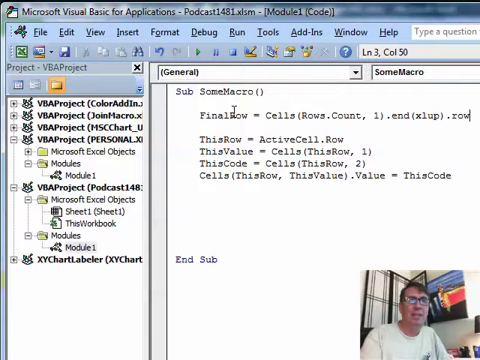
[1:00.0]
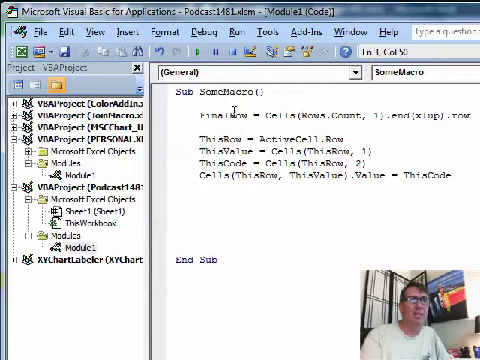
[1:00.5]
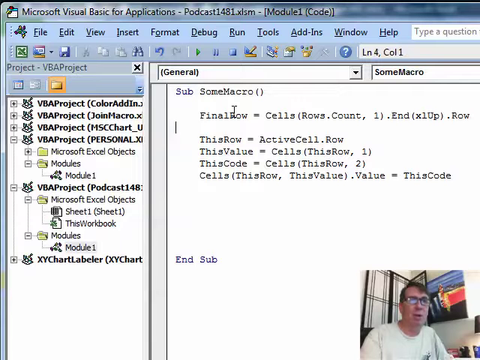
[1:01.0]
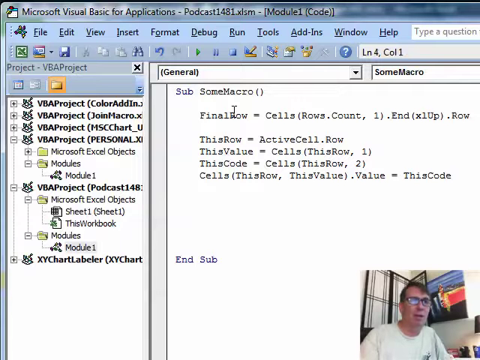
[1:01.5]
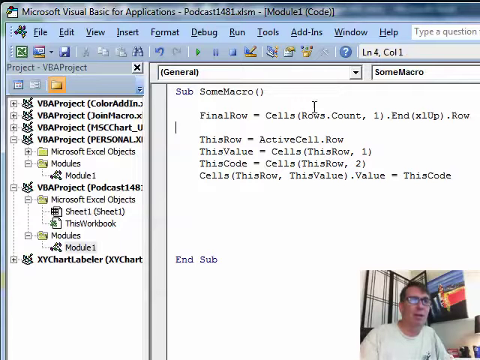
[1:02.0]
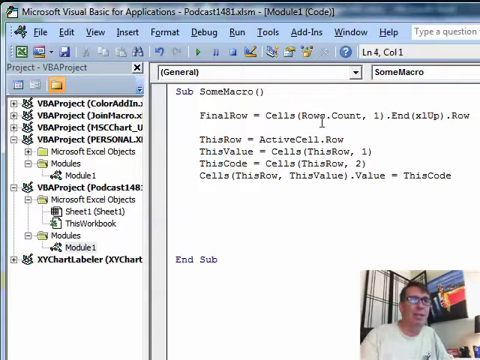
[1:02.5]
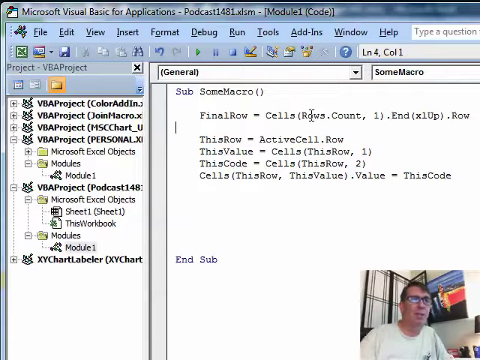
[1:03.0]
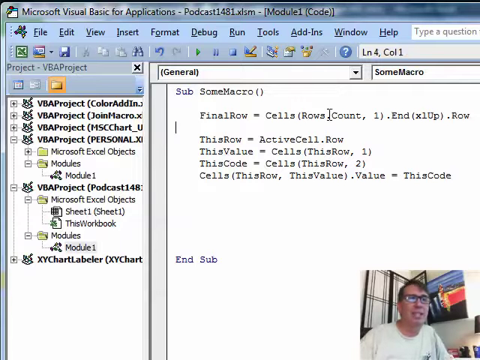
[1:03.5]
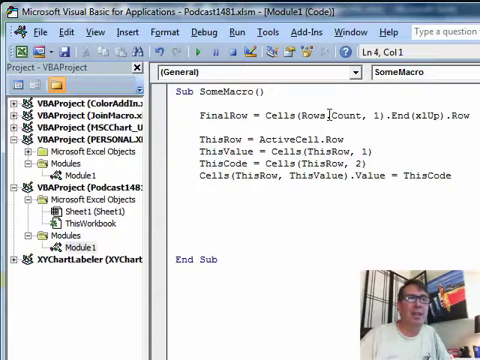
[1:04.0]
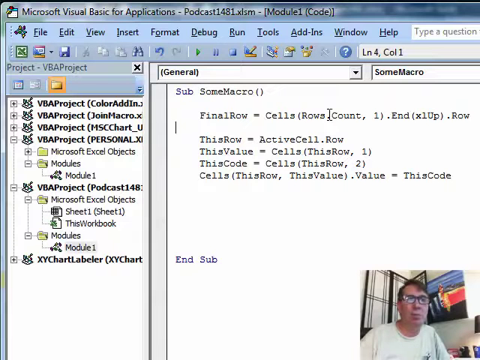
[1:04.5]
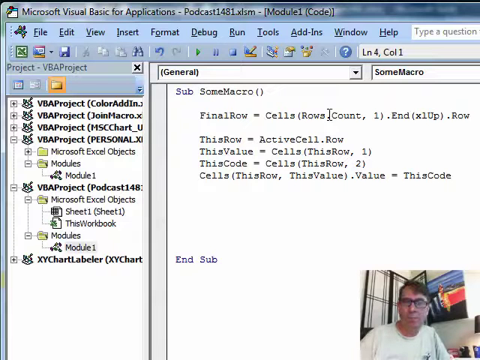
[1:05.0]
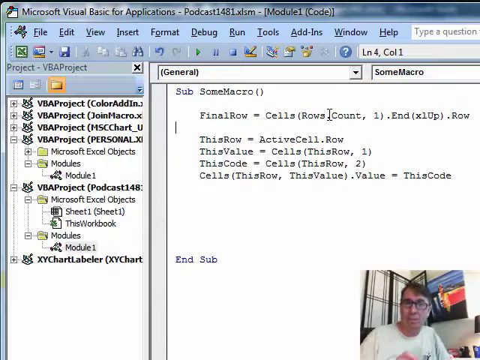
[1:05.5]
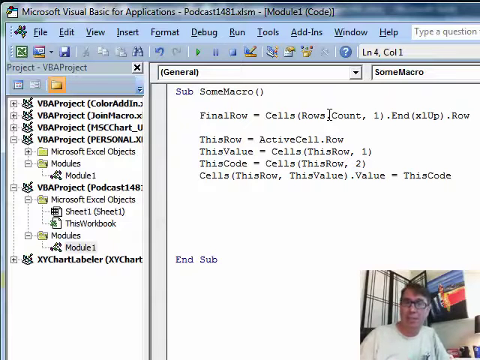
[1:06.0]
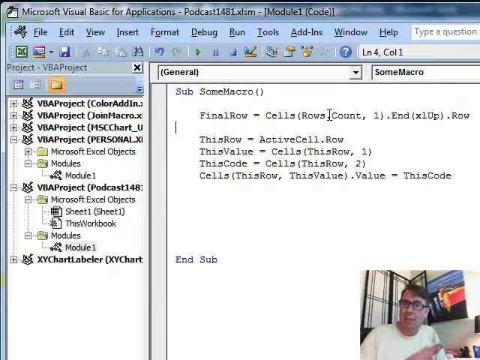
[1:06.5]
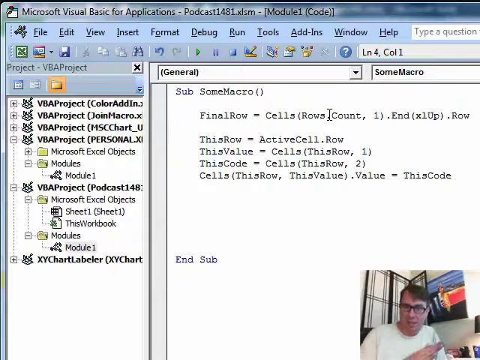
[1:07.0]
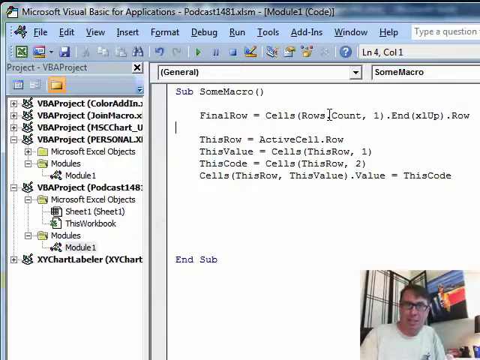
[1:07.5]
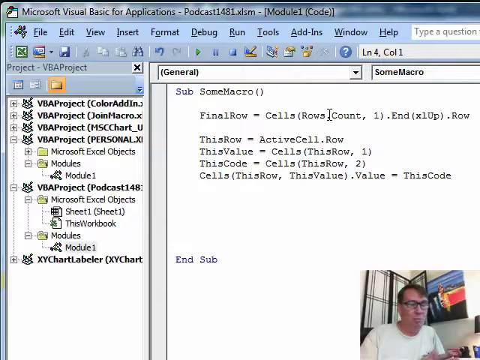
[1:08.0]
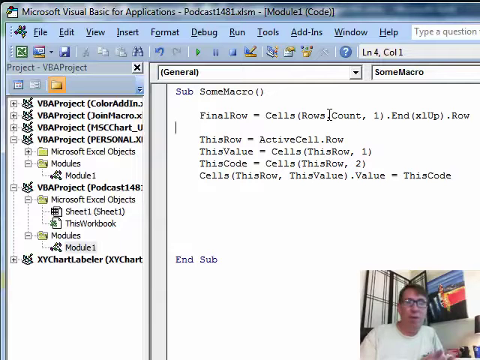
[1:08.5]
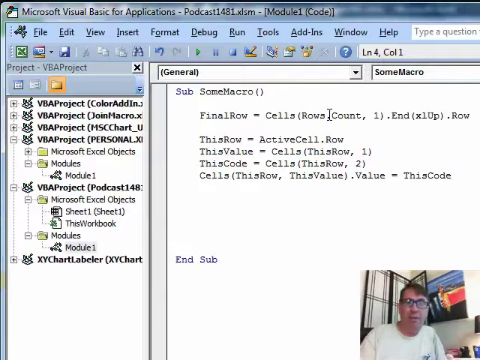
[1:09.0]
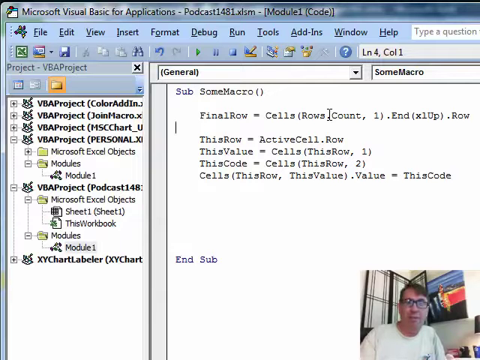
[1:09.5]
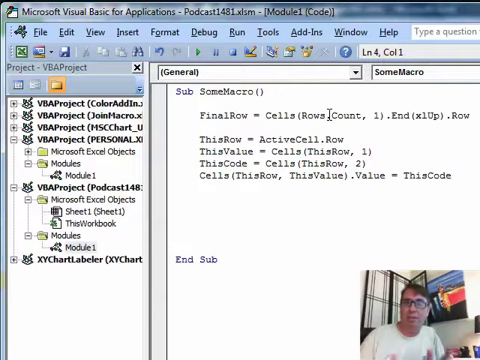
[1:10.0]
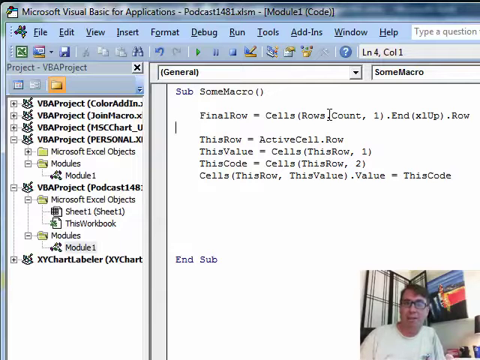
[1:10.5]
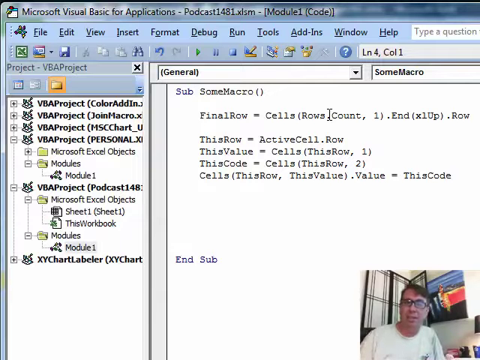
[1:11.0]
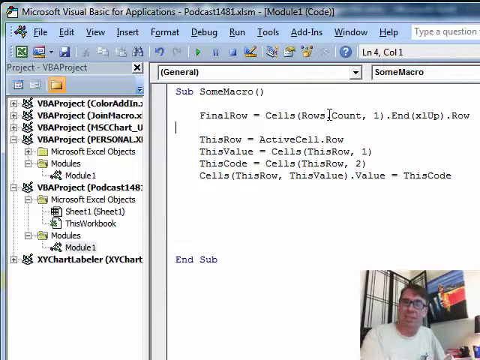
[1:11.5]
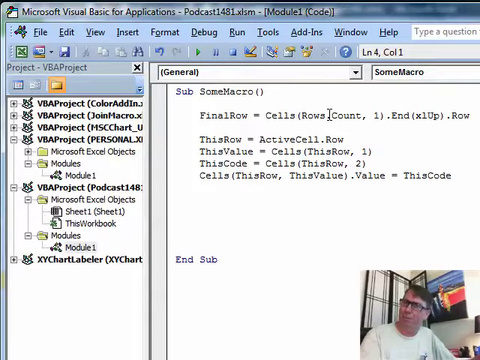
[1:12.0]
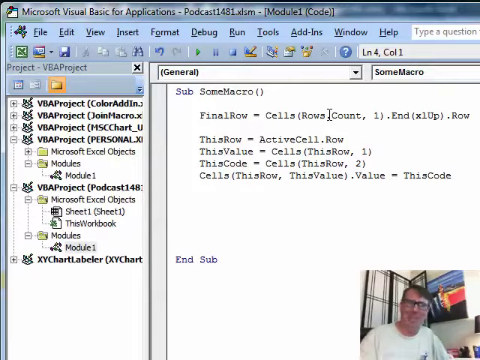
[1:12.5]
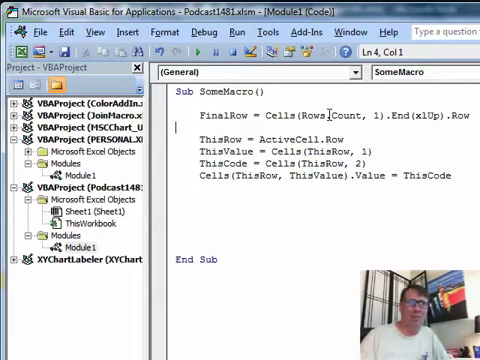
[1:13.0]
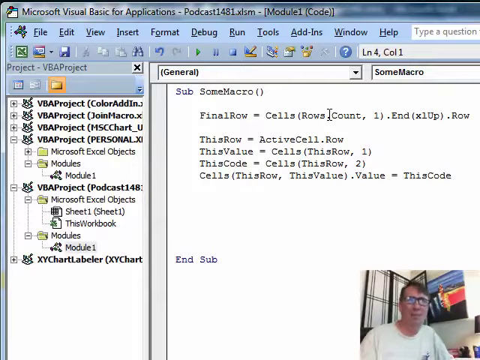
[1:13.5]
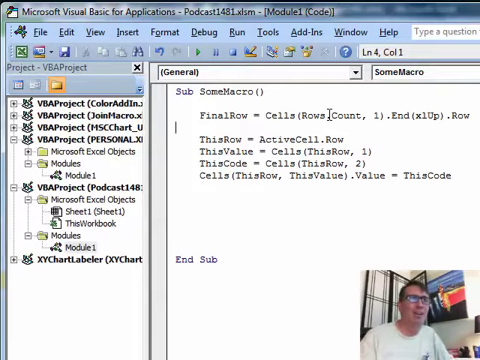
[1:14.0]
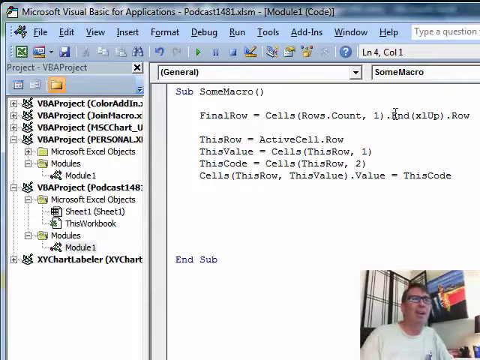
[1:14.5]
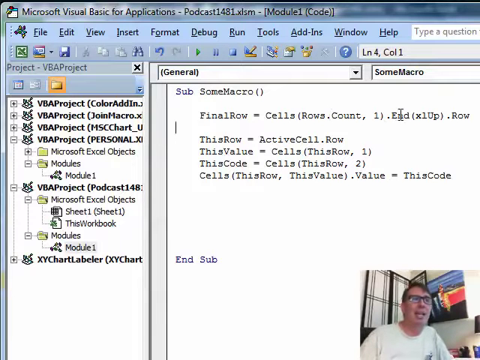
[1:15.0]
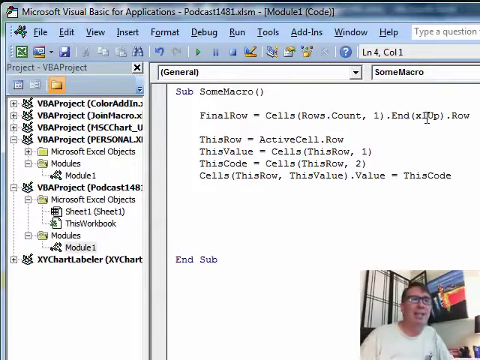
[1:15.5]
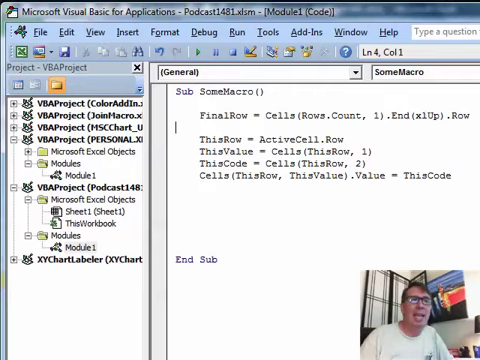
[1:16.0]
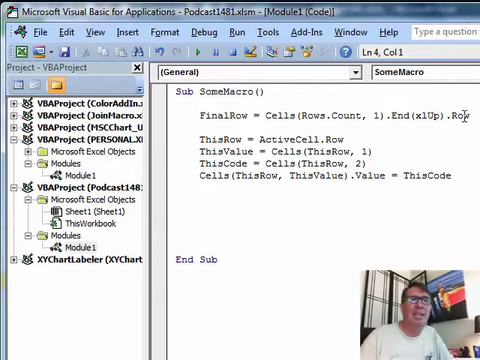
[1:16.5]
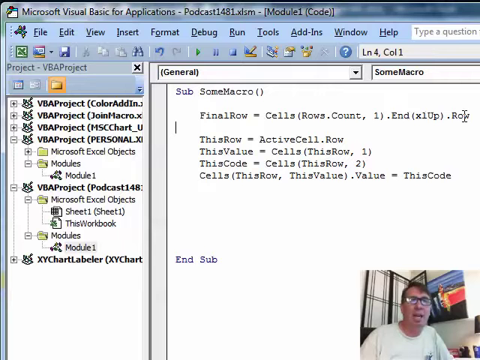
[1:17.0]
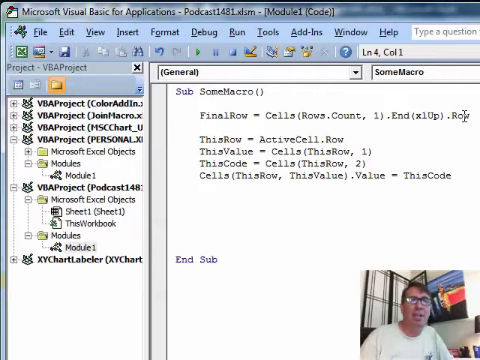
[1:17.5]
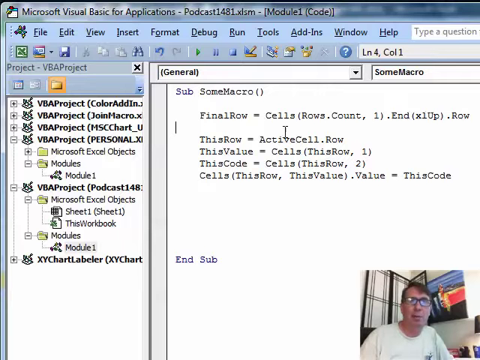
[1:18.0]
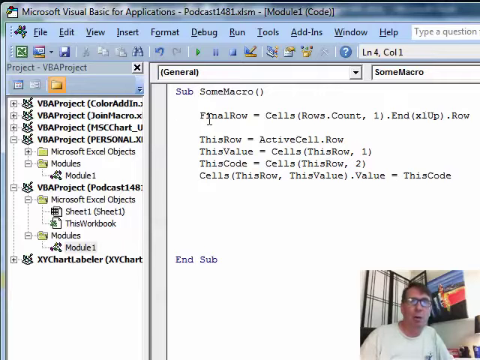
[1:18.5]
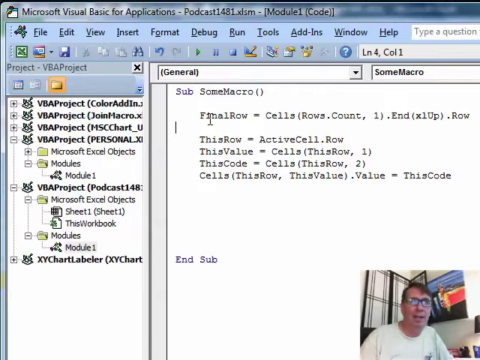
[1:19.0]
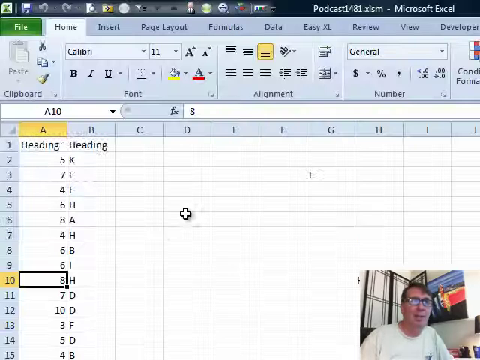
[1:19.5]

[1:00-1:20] The view remains in the macro, in Visual Basic for Applications, with the man still in the picture-in-picture, apparently teaching how to set up macros. He is white, with dark hair, black glasses and a white shirt. A picture in the background has blue, red and black in it. He moves between the spreadsheet and the VBA project. Letters are typed on the screen, reading "sub, some macro, final row, this row, this value, this code, cells." Some adjustments are made on the spreadsheet, and it looks like some of the rows have disappeared. The view then goes back to the VBA project screen.